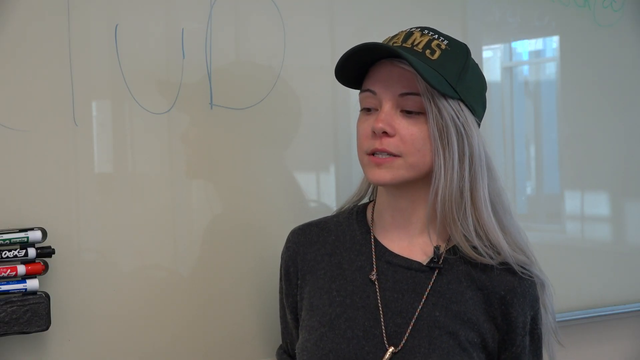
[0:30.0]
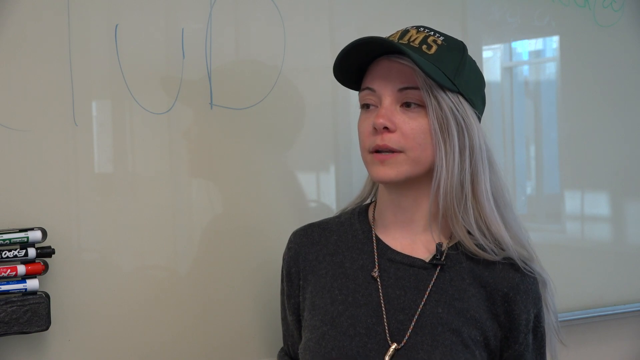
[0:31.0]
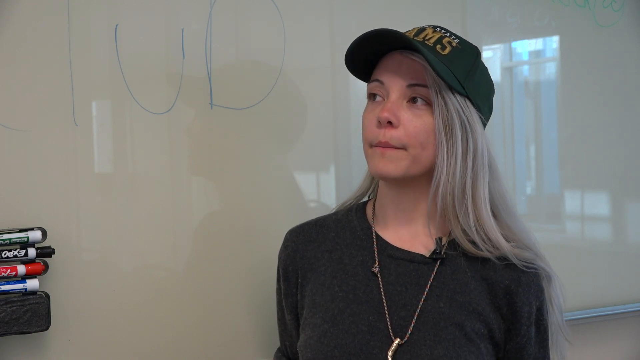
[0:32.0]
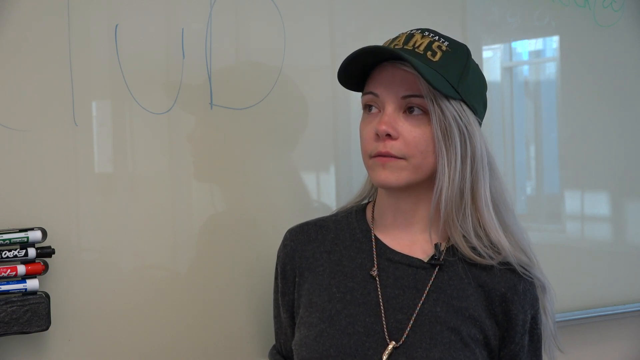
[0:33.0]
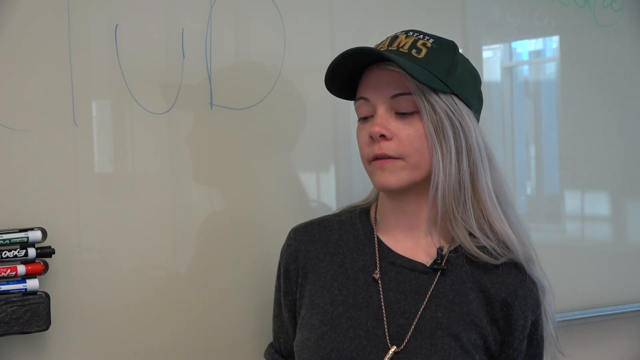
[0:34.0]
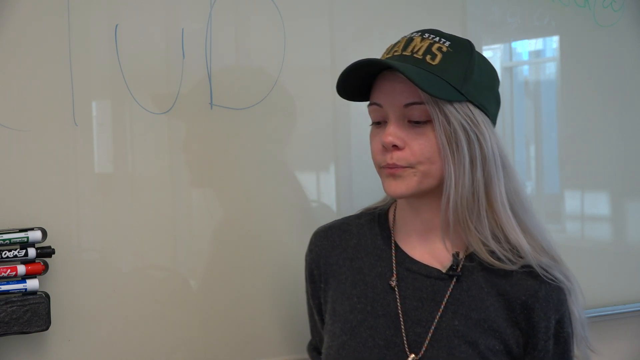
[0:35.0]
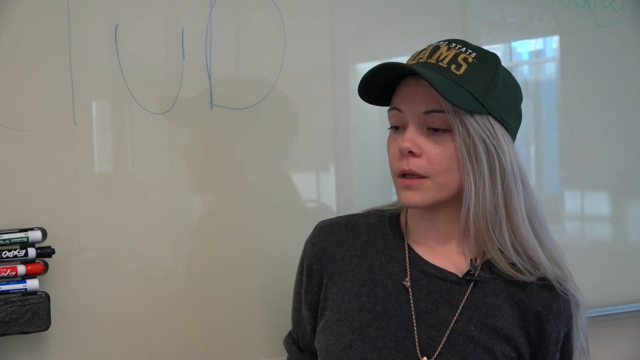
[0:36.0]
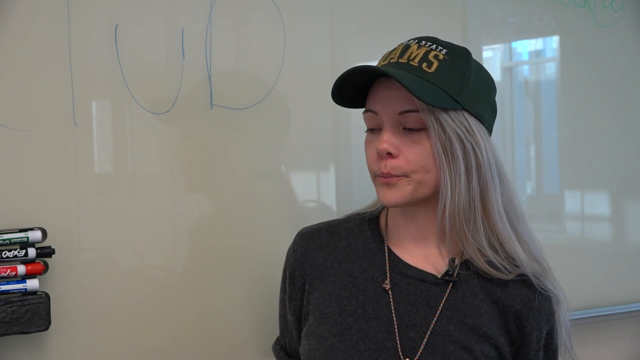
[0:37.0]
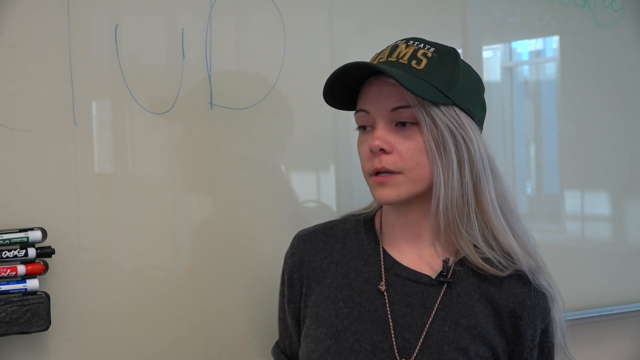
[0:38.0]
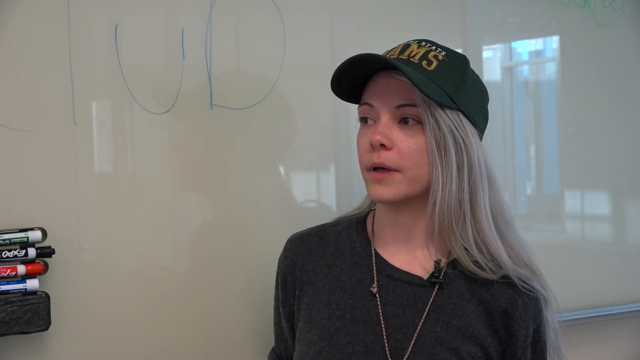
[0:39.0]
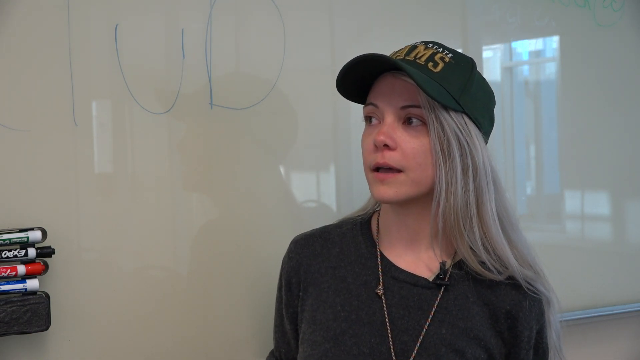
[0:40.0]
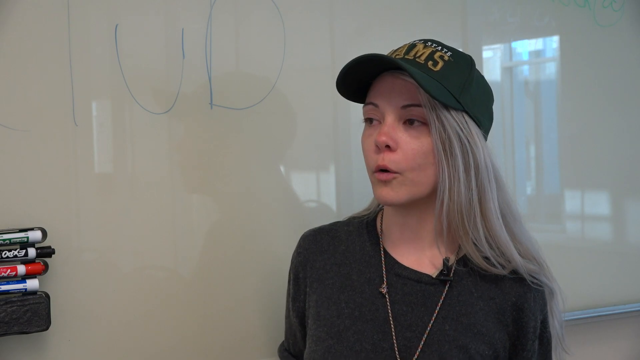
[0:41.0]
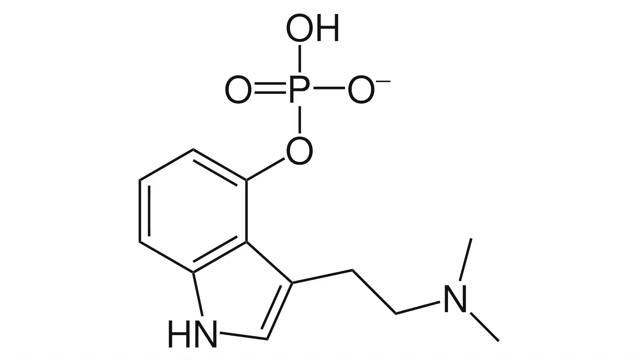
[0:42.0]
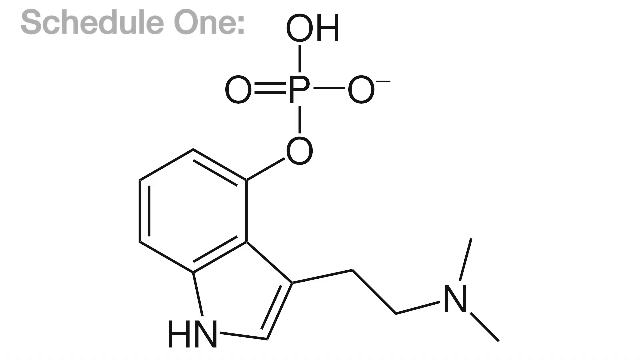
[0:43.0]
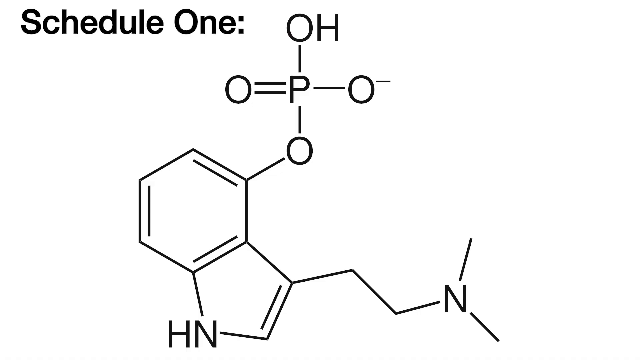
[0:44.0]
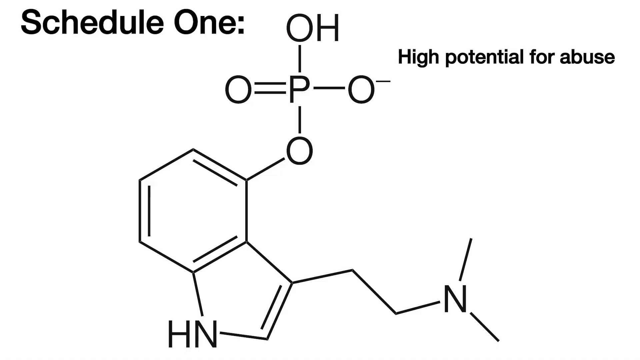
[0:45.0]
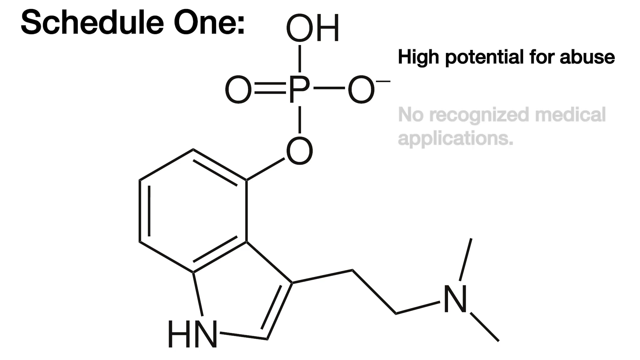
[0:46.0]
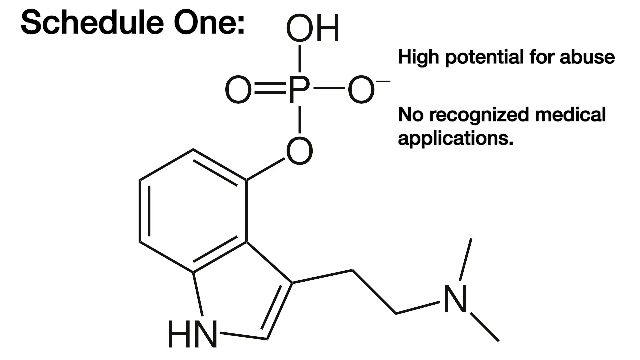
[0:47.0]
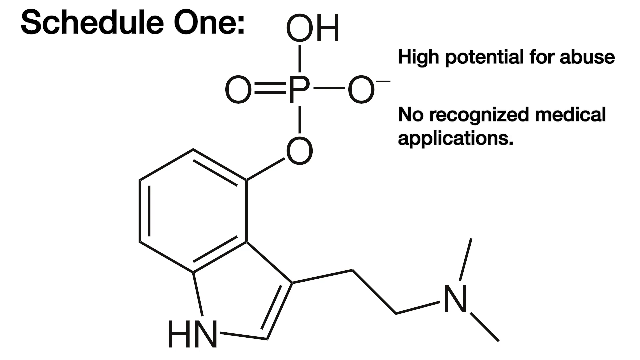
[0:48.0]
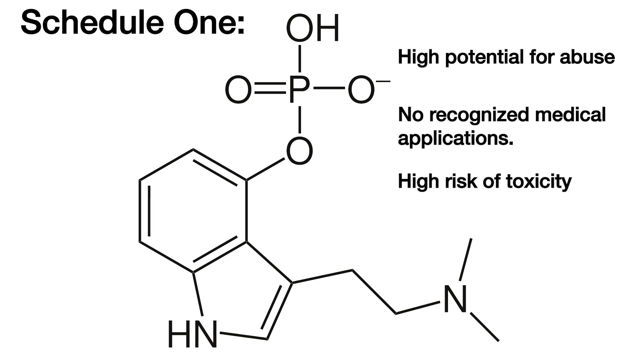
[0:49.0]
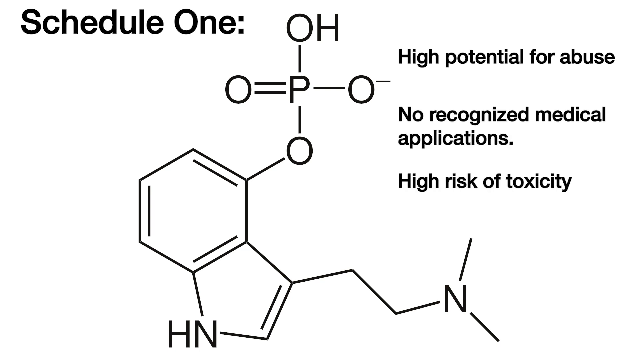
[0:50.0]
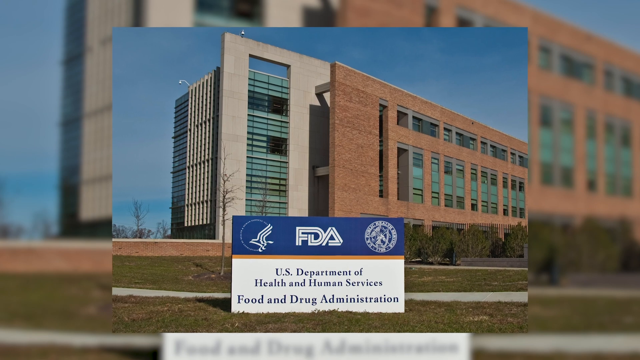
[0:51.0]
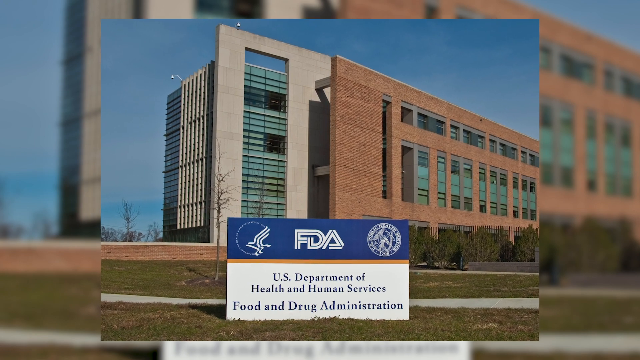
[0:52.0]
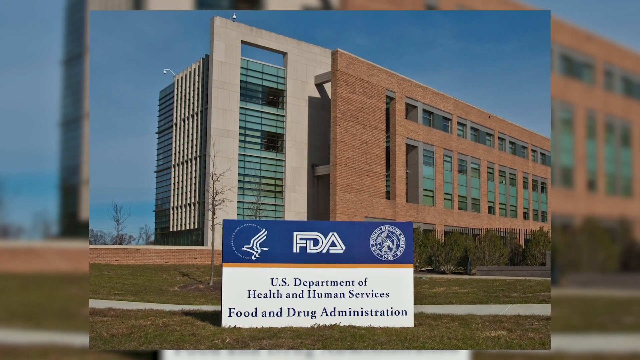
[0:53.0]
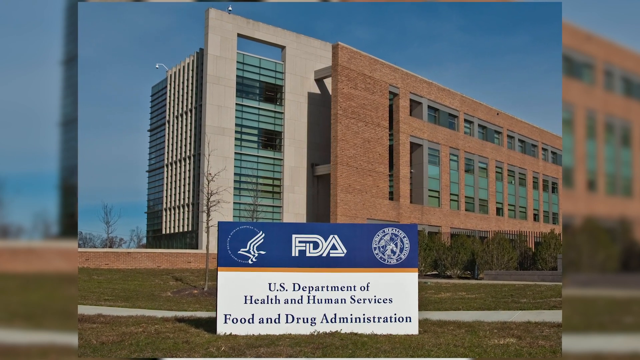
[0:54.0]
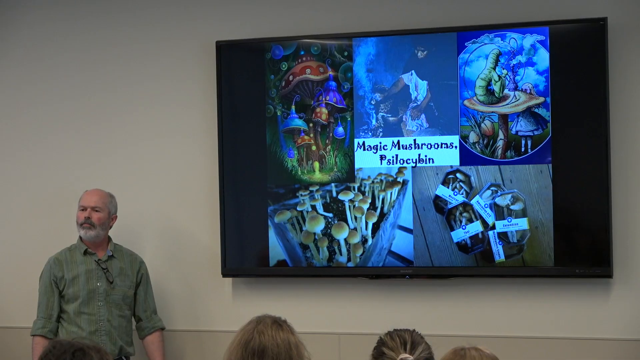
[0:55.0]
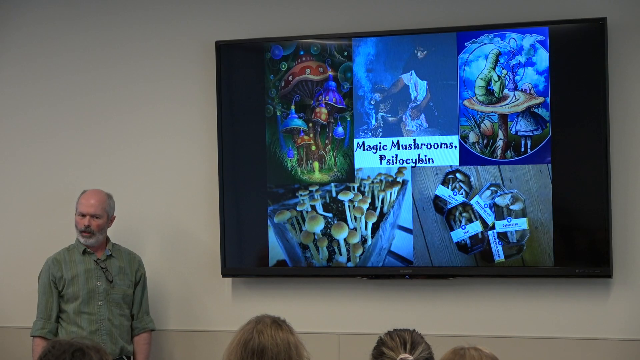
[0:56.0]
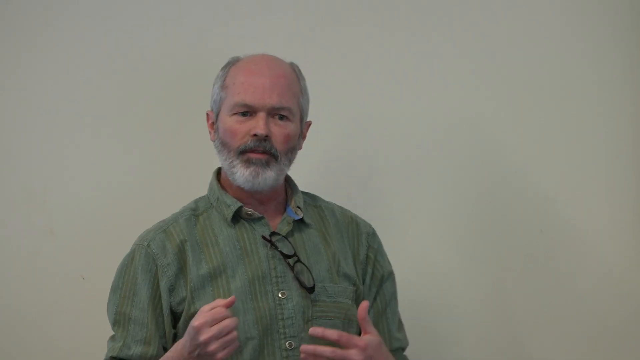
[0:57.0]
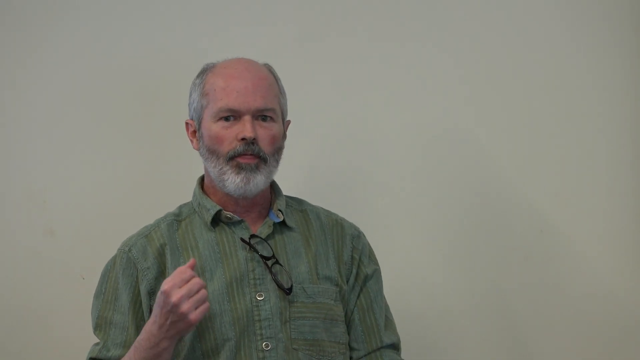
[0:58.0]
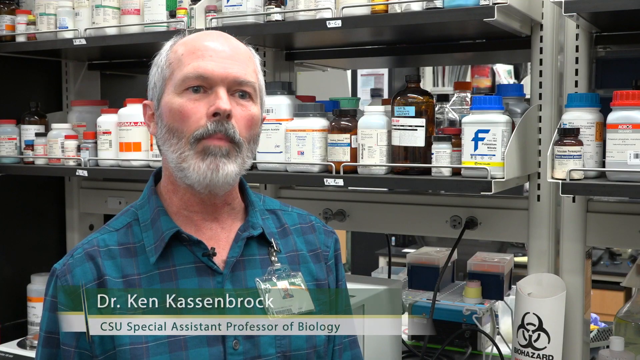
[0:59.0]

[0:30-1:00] A woman wearing a hat stands next to a large dry-erase board and speaks. The video cuts to what looks like a scientific diagram with "Schedule 1" at the top, "high potential for abuse" on the right-hand side, and "no recognized medical applications". The diagram also has letters: H and P at the top, and HN and N toward the bottom. The scene then switches to a large building, the FDA, with the text "US Department of Health and Human Services, Food and Drug Administration". A gentleman named Dr. Ken Kassenbrock speaks in front of what appears to be a class, delivering some type of presentation using what may be a TV or monitor whose screen says "magic mushrooms".